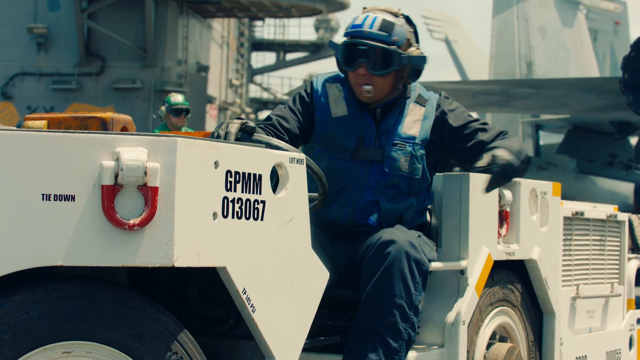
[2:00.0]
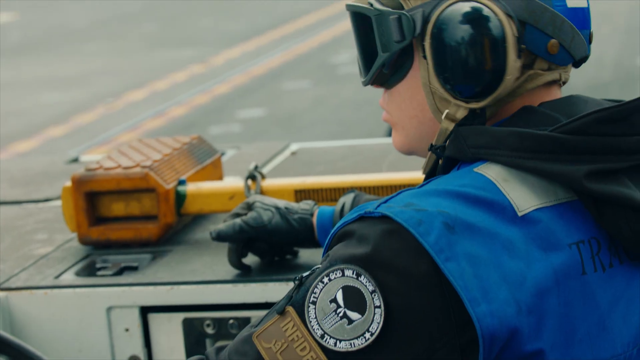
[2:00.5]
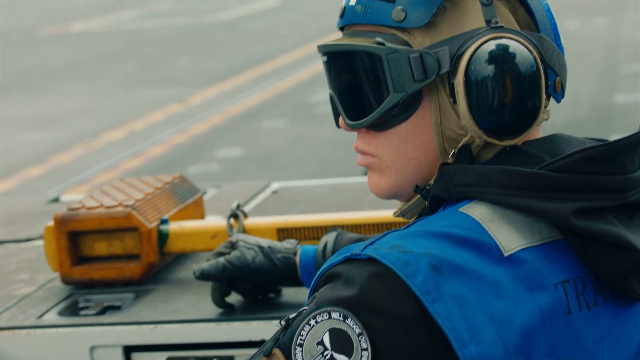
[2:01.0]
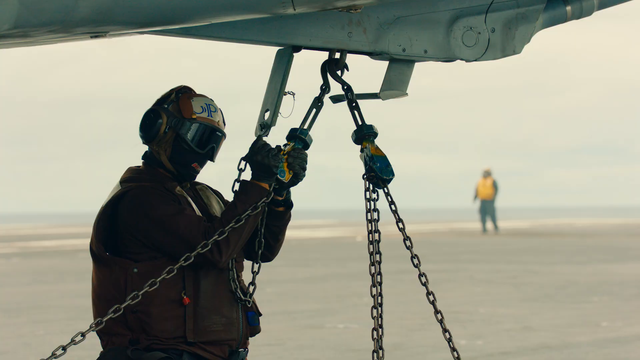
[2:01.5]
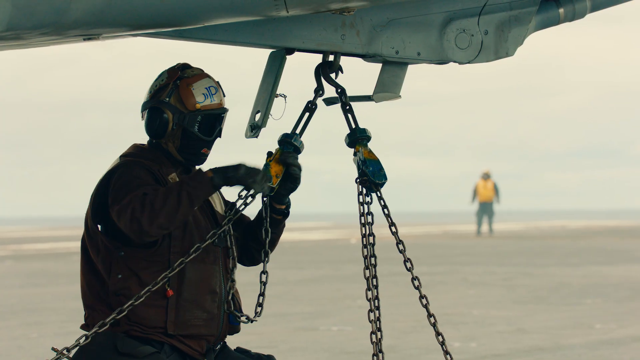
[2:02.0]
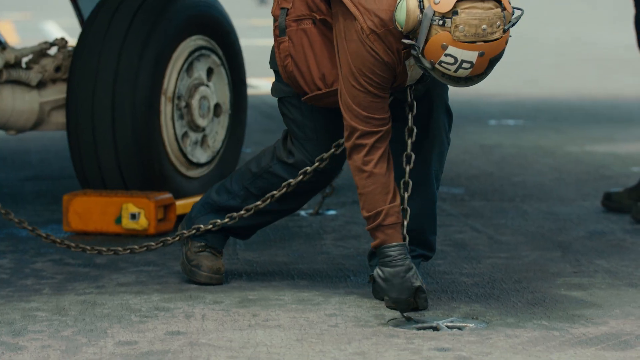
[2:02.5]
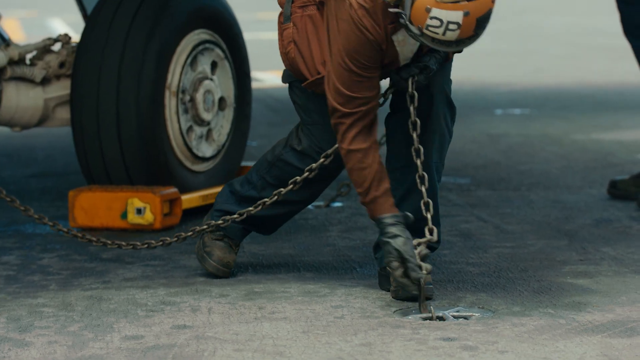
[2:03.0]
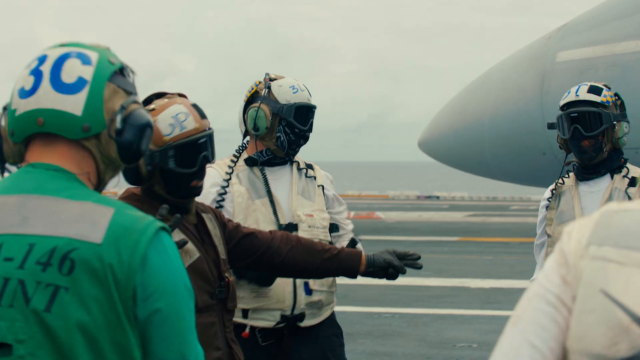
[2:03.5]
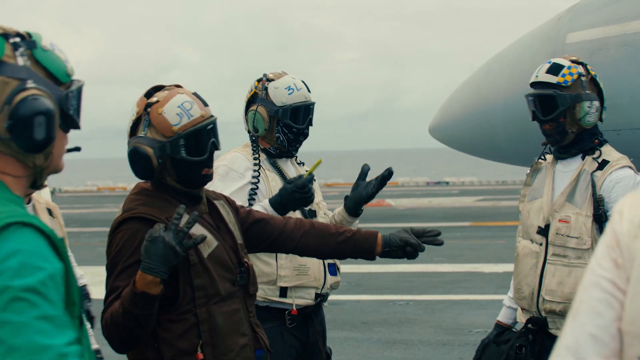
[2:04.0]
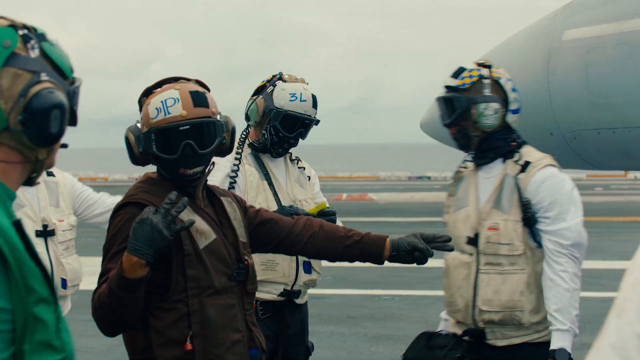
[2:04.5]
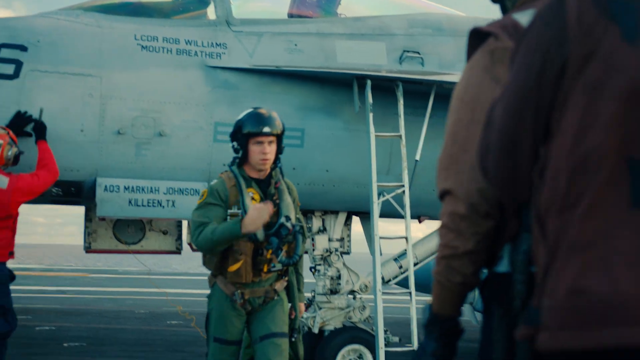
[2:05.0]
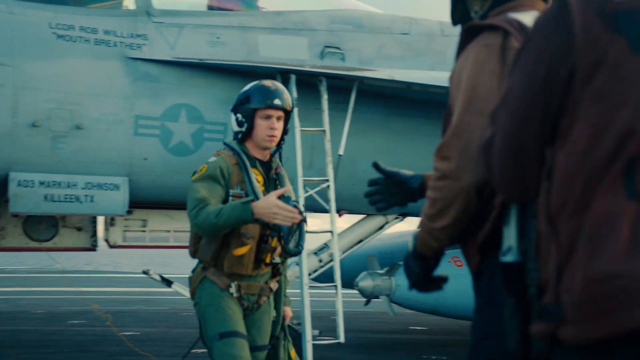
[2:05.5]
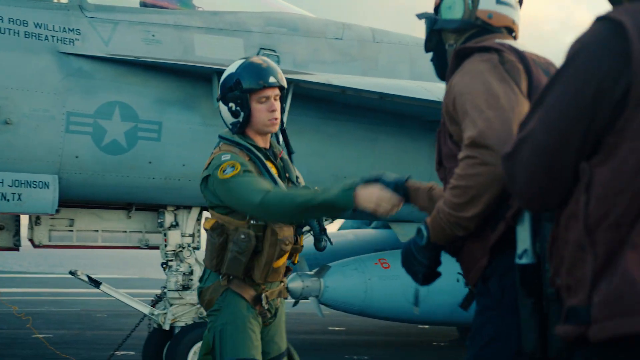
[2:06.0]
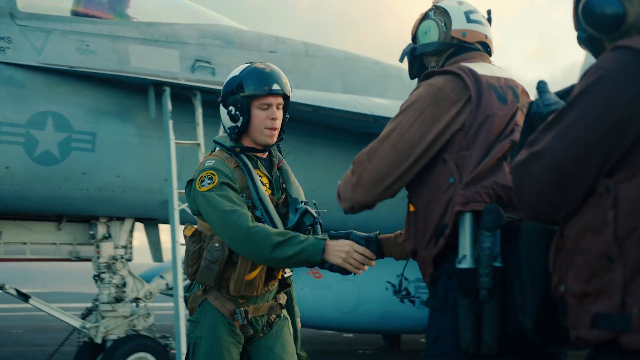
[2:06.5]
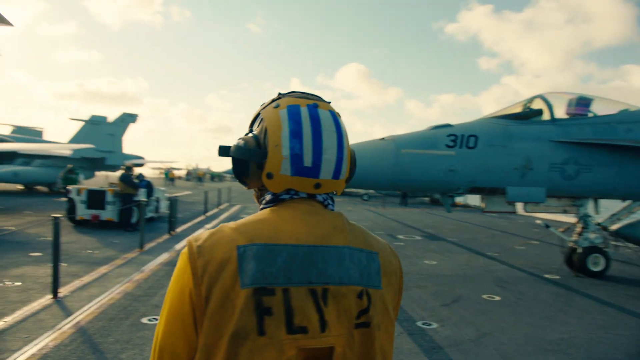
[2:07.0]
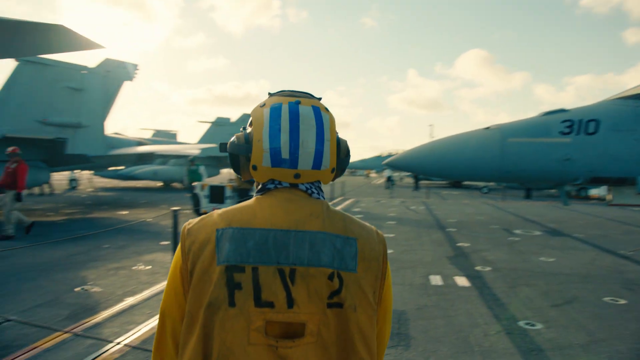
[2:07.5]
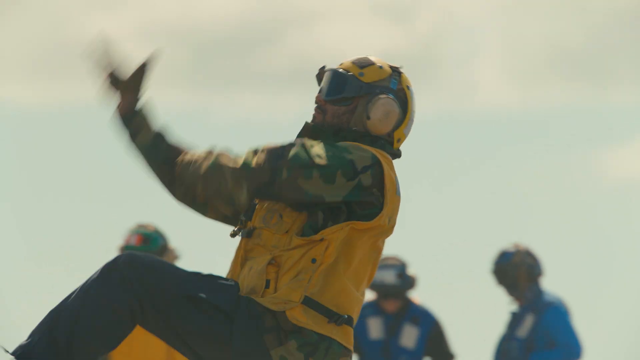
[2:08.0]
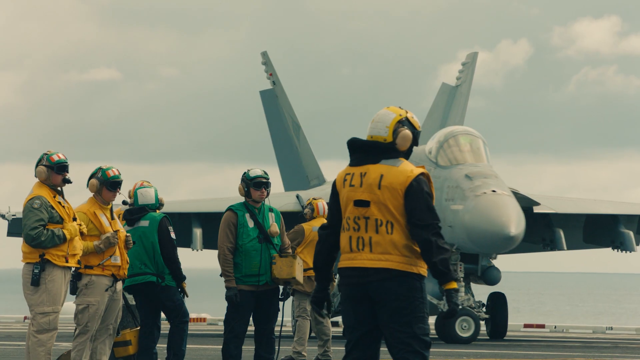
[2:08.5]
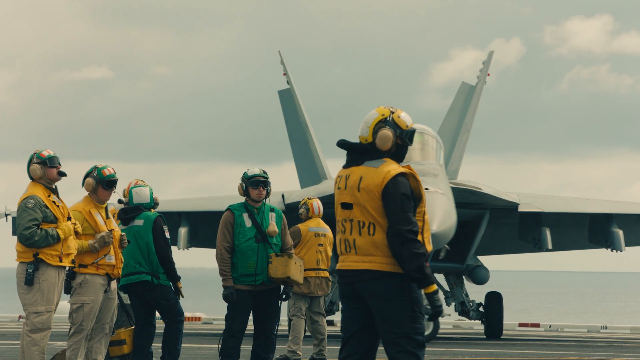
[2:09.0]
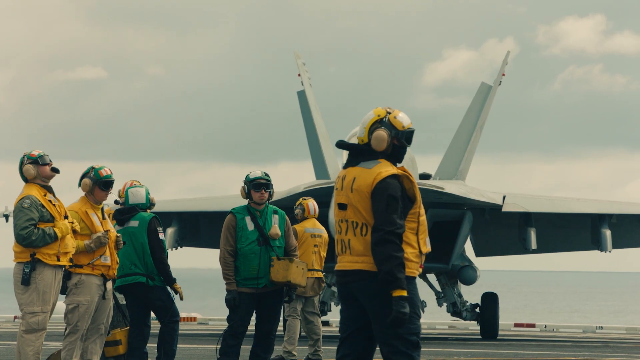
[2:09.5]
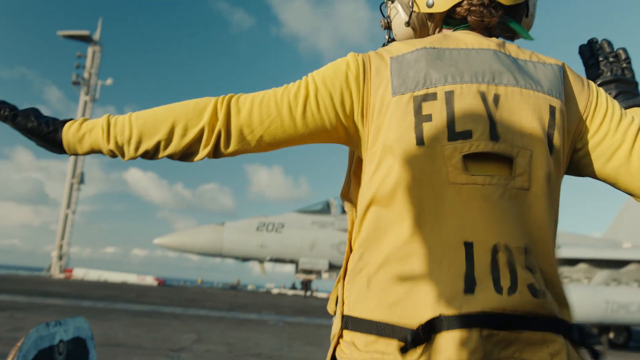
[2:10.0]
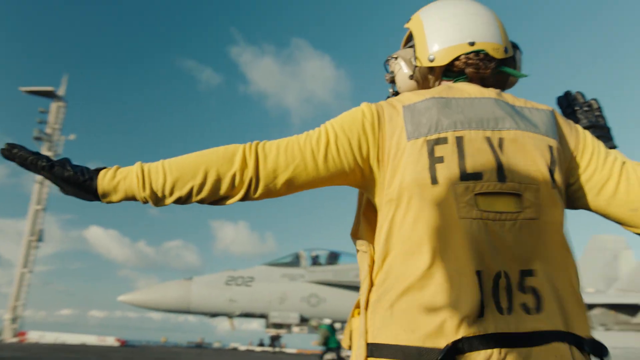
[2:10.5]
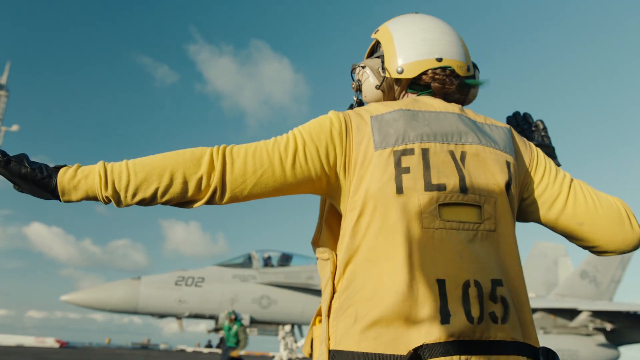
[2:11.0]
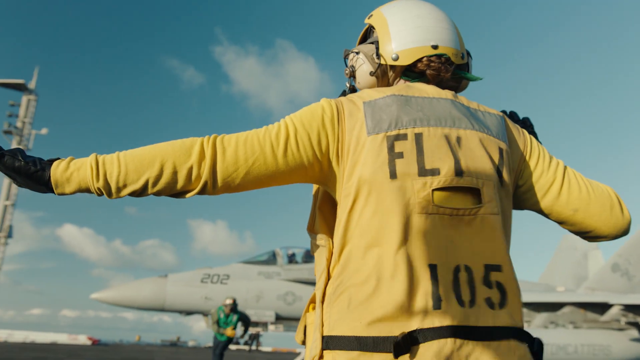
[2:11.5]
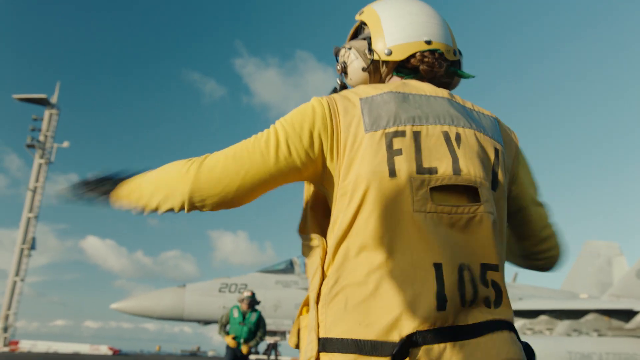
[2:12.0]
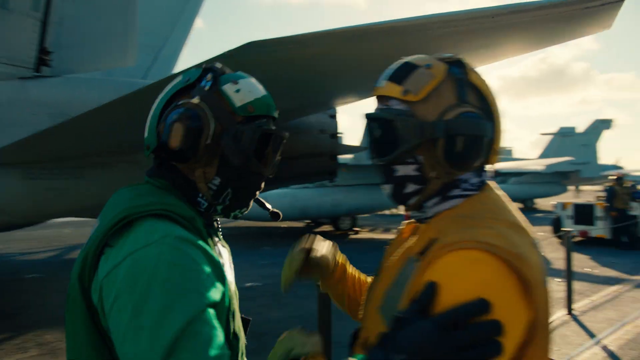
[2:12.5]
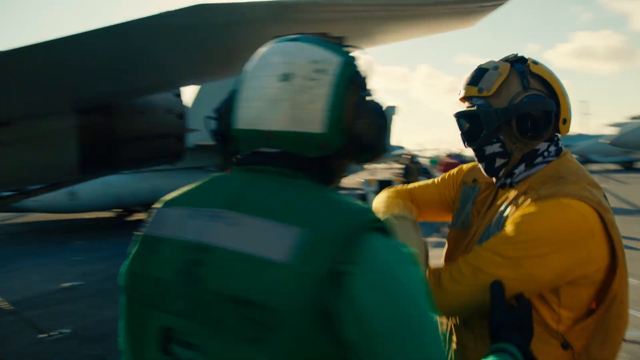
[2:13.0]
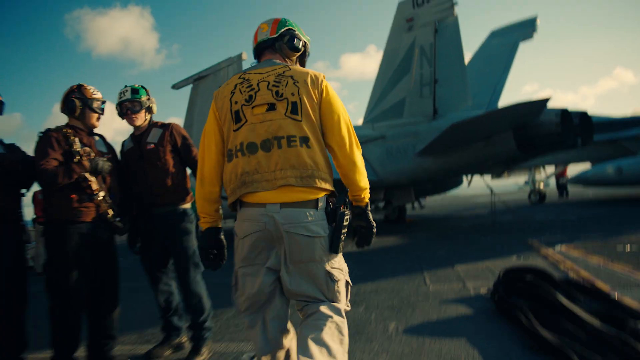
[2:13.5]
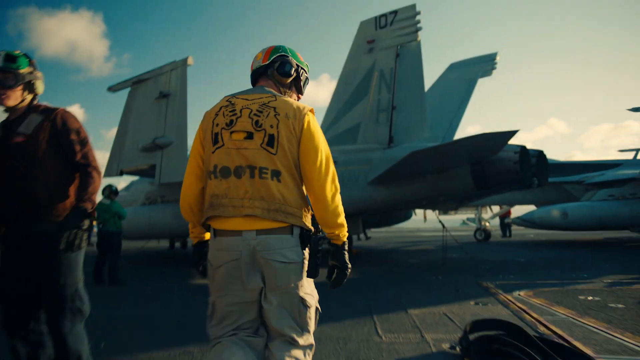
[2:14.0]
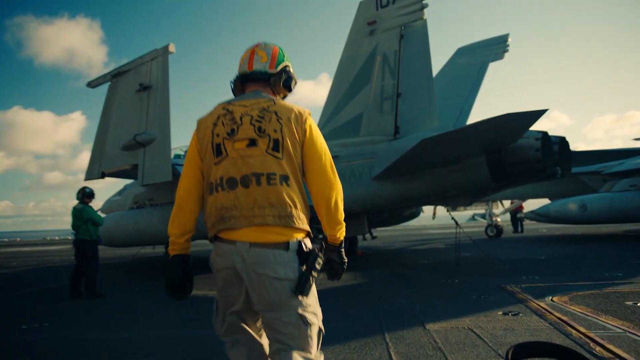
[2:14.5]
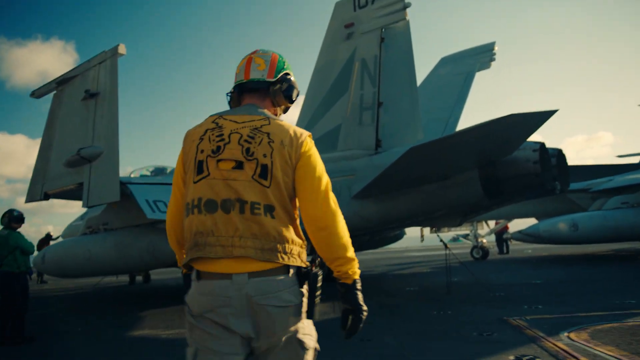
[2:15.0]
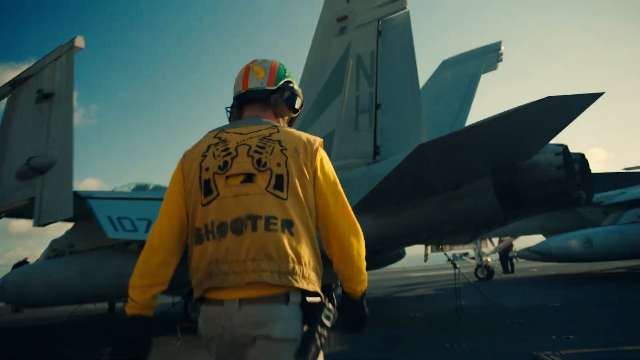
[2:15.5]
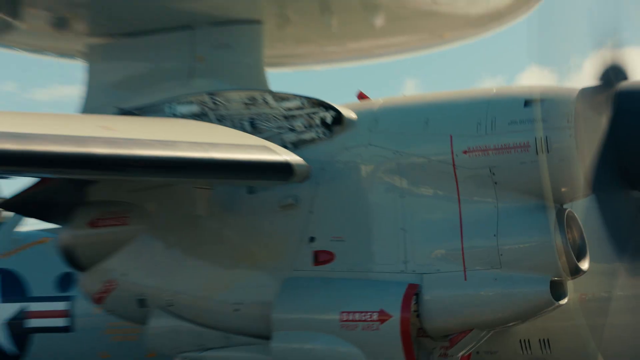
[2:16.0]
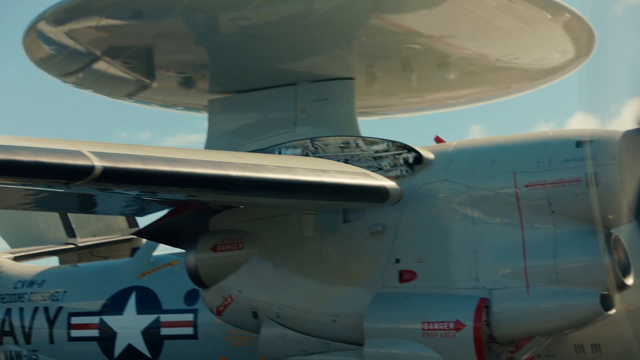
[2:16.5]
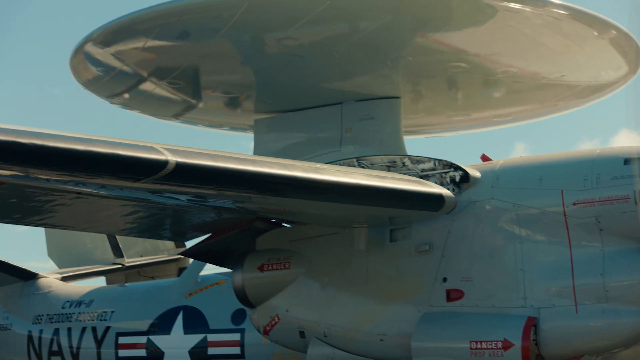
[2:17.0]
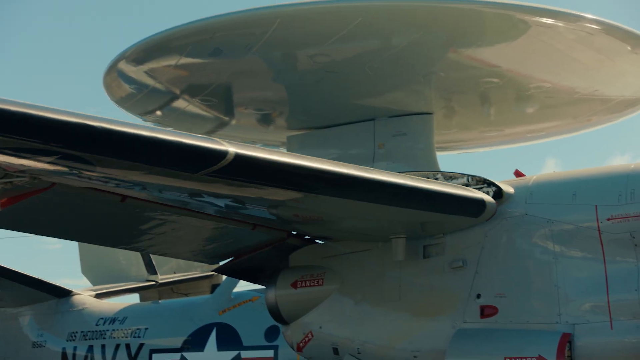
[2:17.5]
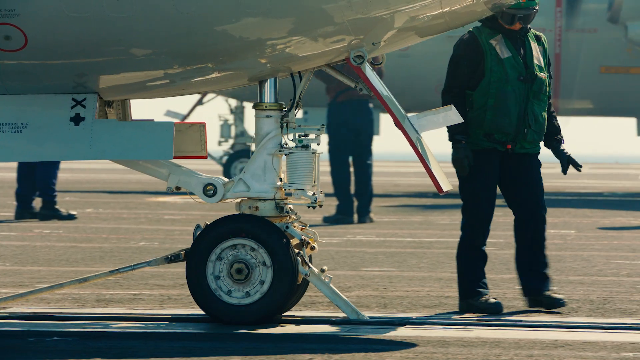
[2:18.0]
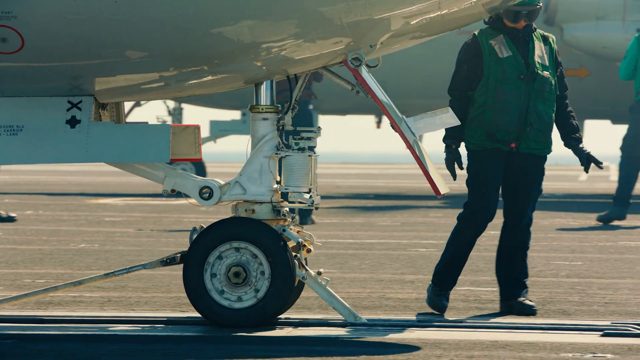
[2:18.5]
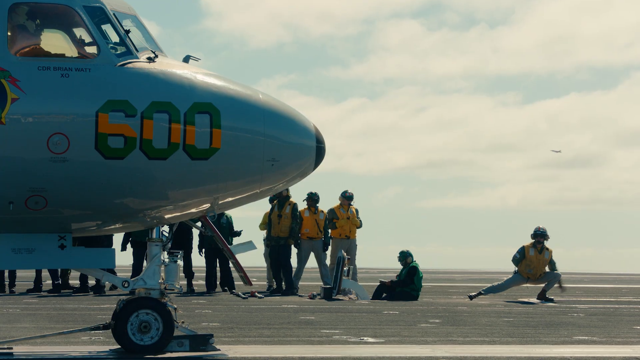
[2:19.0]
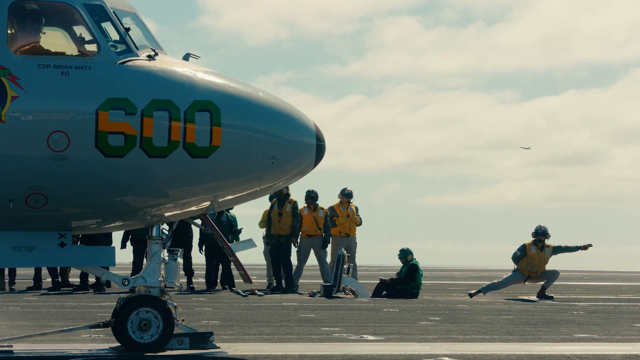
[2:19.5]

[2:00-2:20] A person in blue looks off toward the left side of the screen, followed by a brief shot of someone attaching several more chains with hooks on the end to the bottom of some kind of vehicle, and another of someone attaching the same device onto the ground. A close-up shows several more aircraft controllers in a group wearing different colors of uniform. A man in all olive green wearing a black helmet gives a little salute and shakes the hand of one of the controllers. A controller in a yellow uniform is seen from behind, with planes in front of him. A group of people in yellow and green uniforms follows, then another person in a yellow uniform with the left arm bent and the right arm out straight. Very quickly, one controller in yellow and one in green speak to each other, and another controller in yellow, with the word "shooter" on the back, walks toward a plane. A close-up of the plane follows, then a close-up of the front wheel again, with another controller in green walking just behind. A plane is on the left side with a group of controllers standing in a line behind it, while on the right side of the screen someone is in the same squat position with the right hand out straight that appears at different times throughout the video.